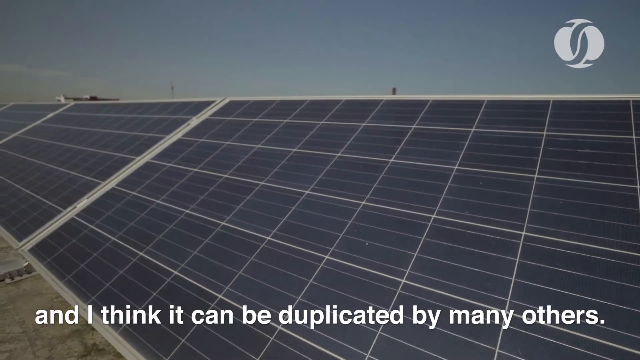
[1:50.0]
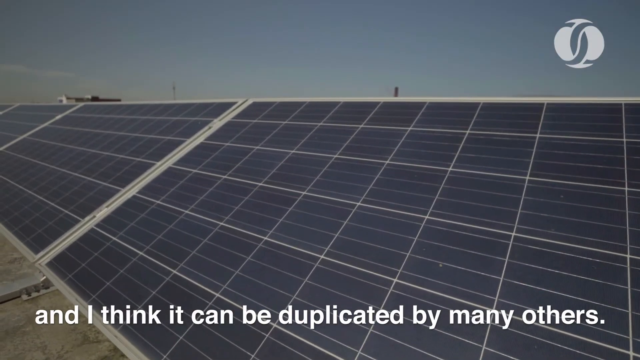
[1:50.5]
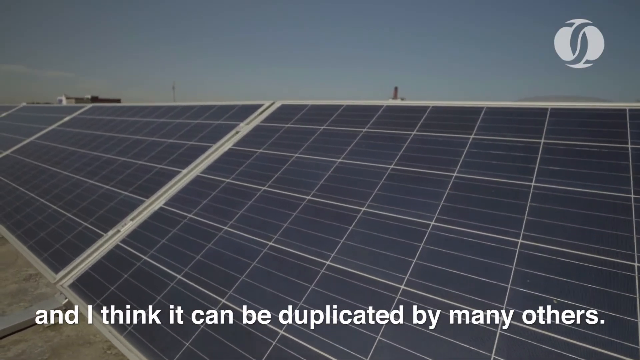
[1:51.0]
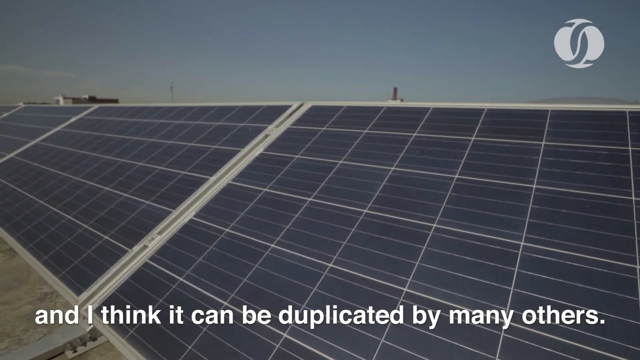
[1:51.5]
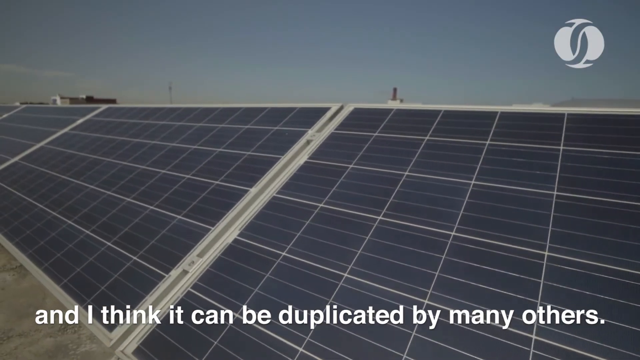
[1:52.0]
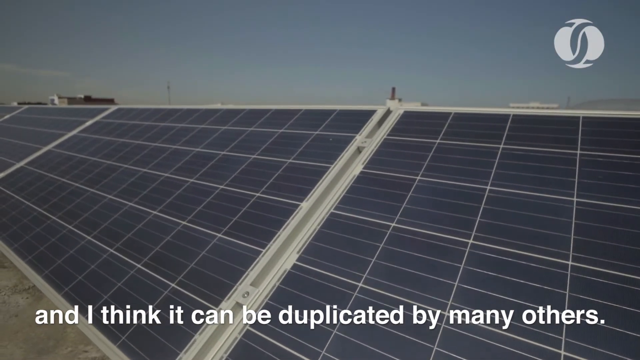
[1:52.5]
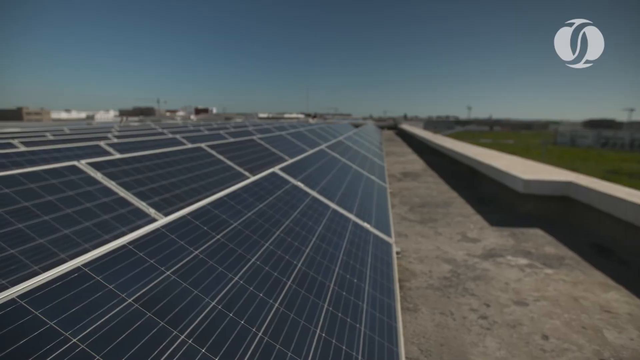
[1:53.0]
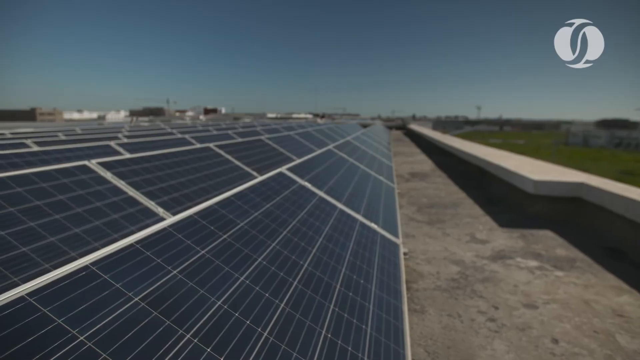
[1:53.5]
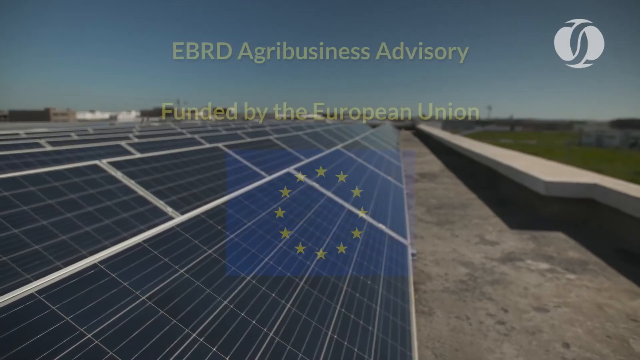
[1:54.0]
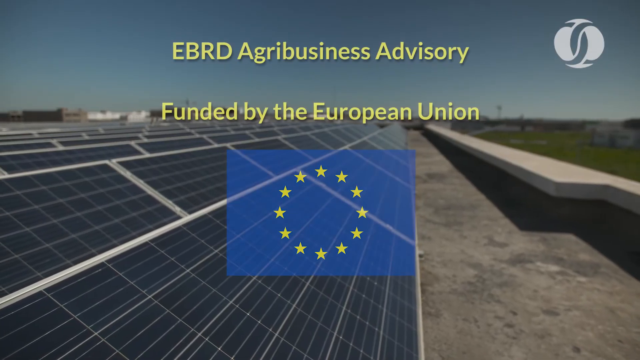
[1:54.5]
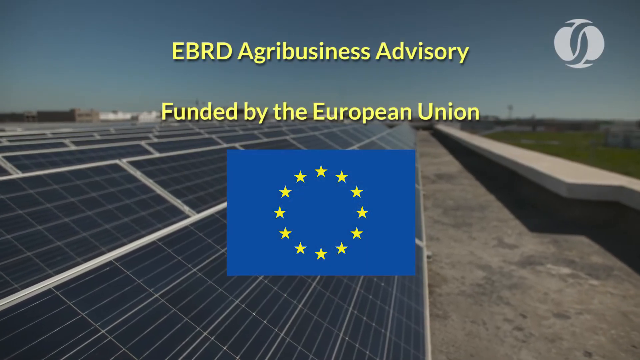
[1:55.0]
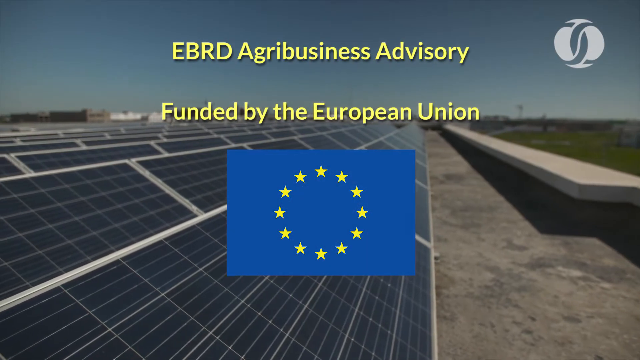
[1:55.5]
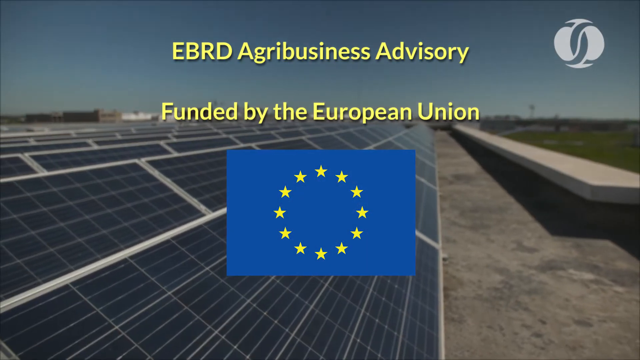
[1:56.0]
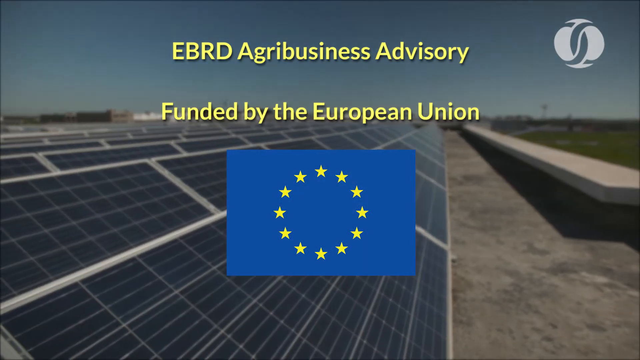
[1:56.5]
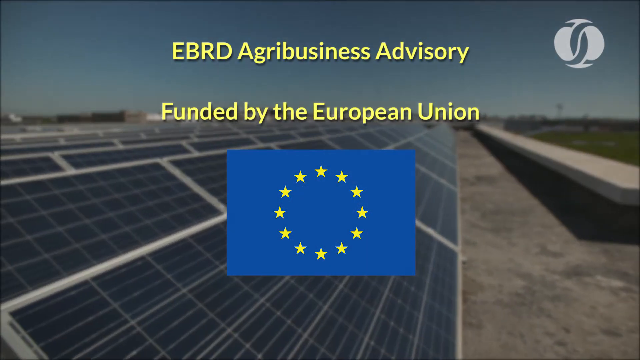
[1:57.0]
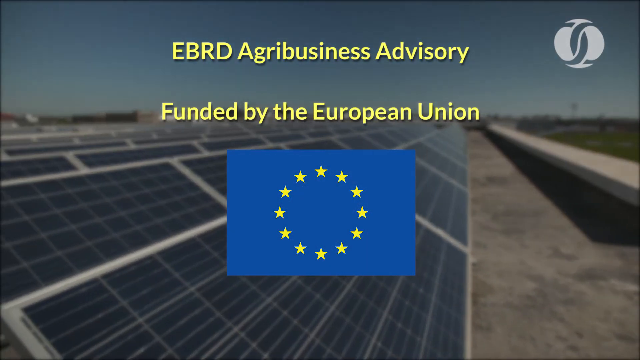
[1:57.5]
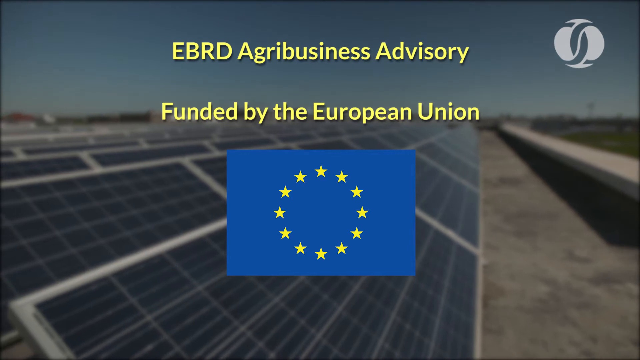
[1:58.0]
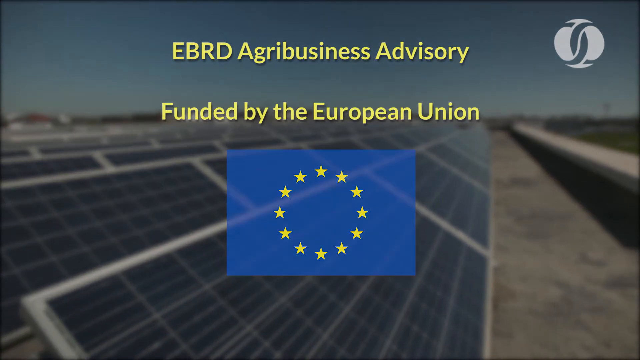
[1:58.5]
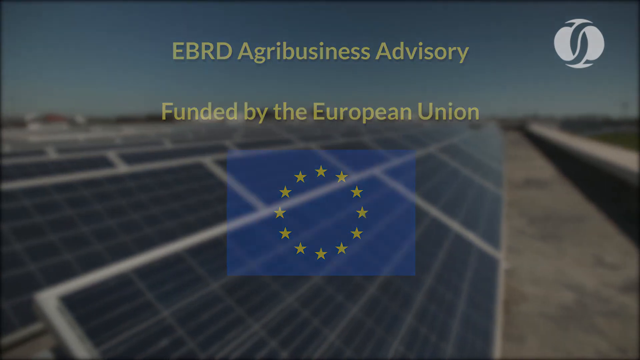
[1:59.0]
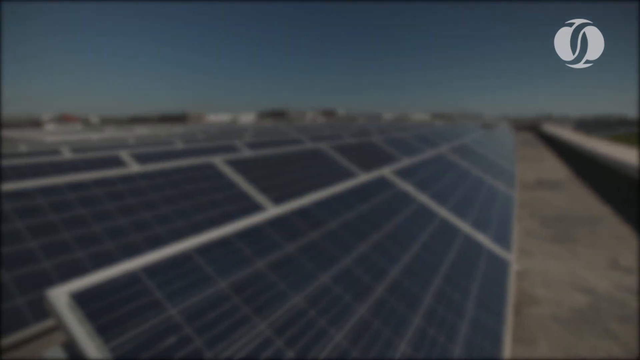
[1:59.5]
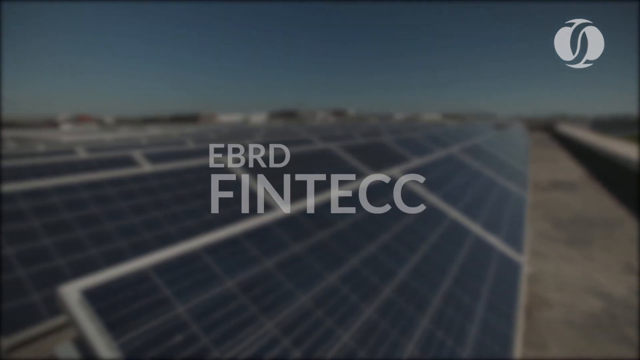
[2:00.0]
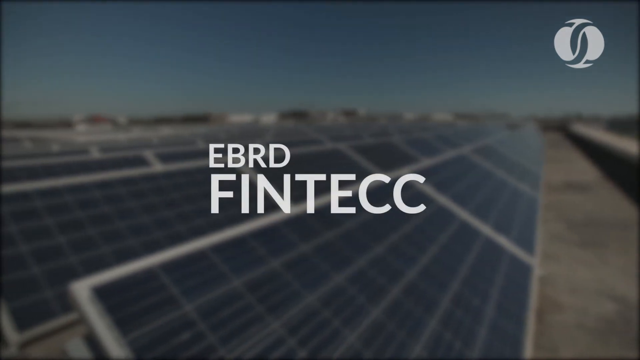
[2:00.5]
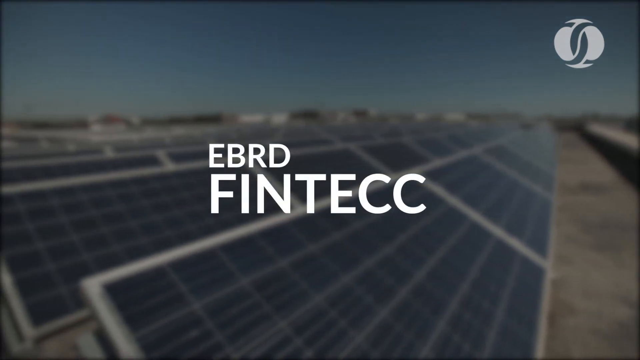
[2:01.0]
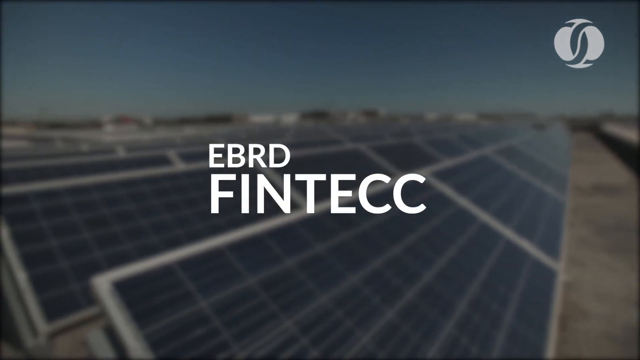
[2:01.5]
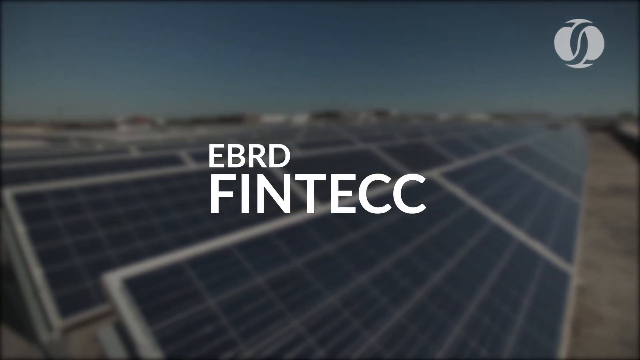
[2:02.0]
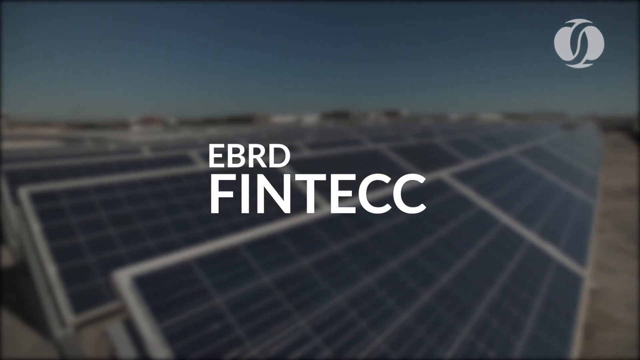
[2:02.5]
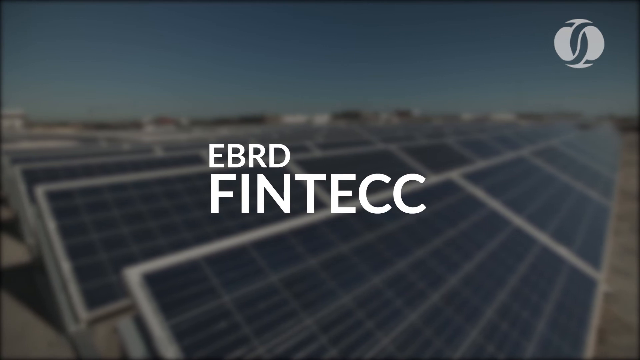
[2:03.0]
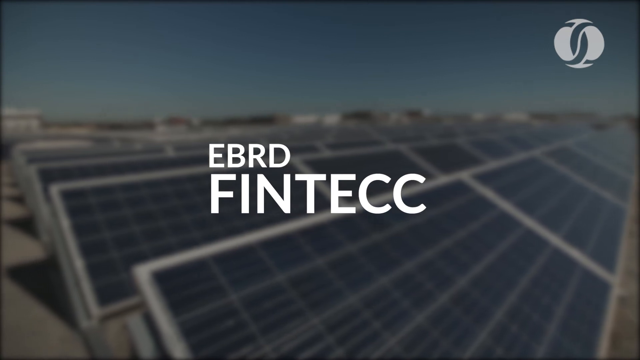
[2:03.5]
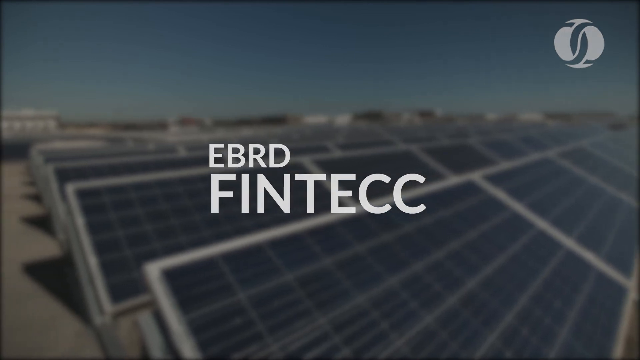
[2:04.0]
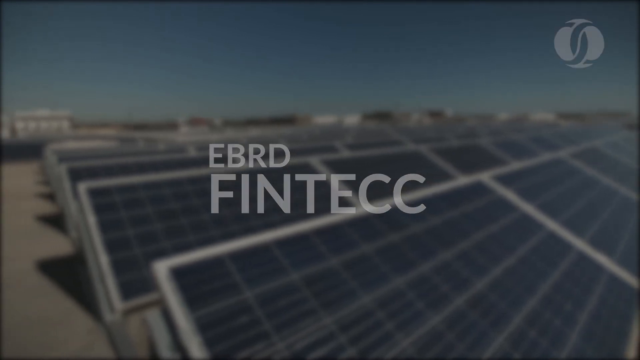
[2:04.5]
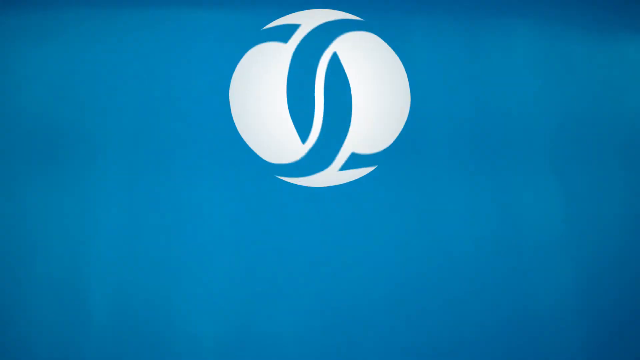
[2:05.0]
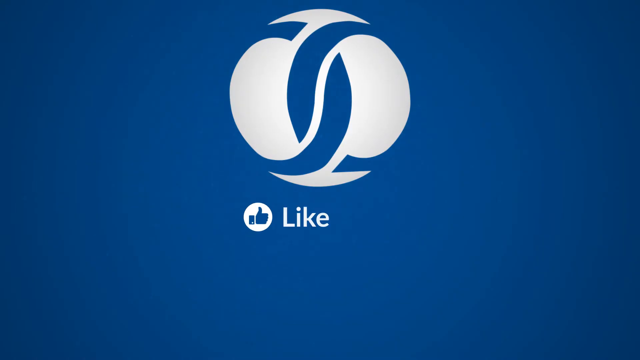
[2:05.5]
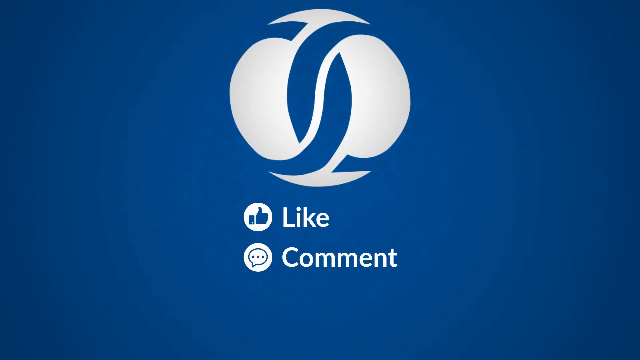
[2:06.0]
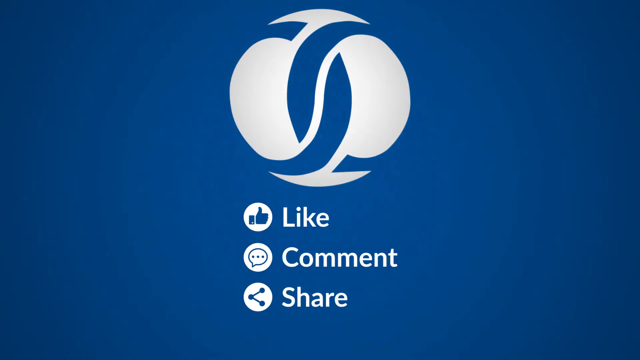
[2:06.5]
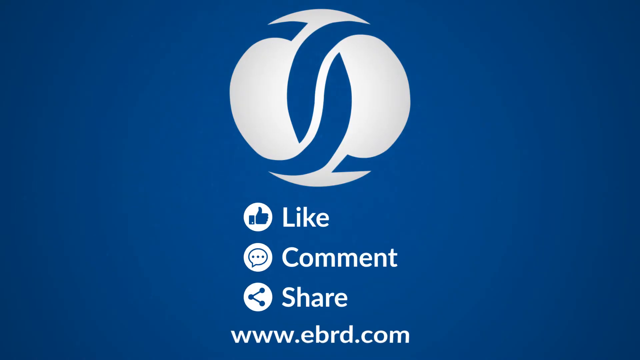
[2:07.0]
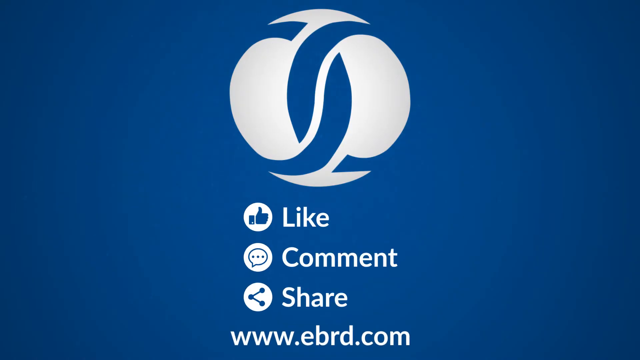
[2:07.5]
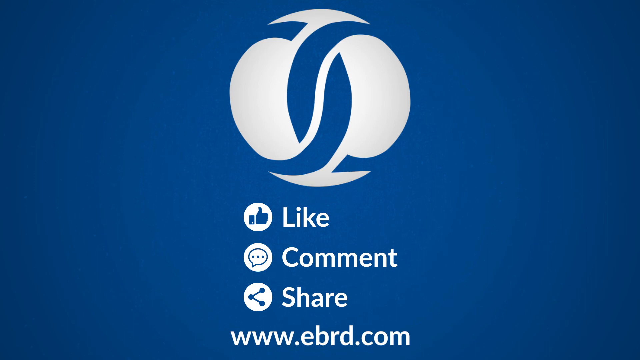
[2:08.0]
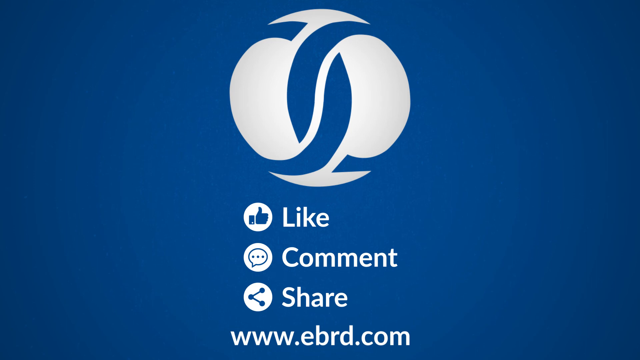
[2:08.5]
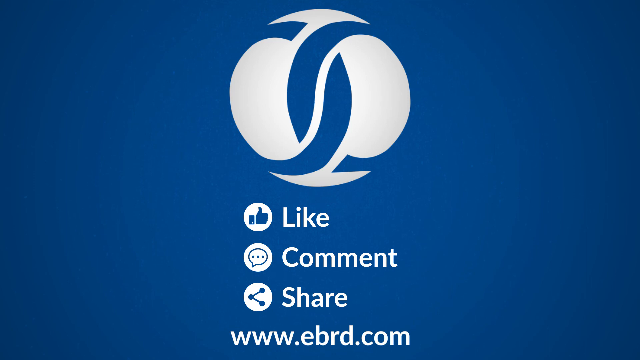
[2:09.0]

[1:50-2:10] His solar panels are shown, with the text "and I think it can be duplicated by many others." The black and white panels face up, with hundreds on the roof, probably 150. The sky is shown. The business owner talks outside by the panels in his black tuxedo. Yellow letters read "EBRD, RD Business Advisory, funded by the European Union," next to the European flag, royal blue with a circle of yellow stars. Further text reads "EBRD, FinTech" and "Like, comment, share, www.ebrd.com."